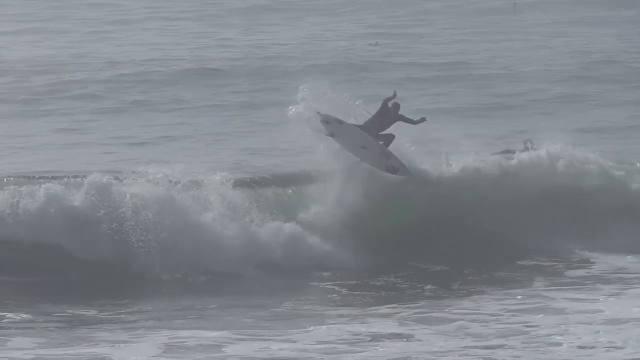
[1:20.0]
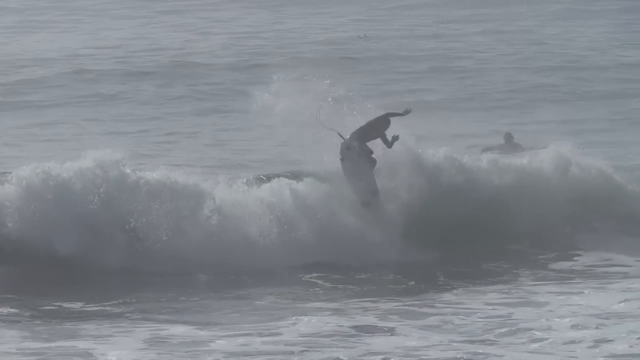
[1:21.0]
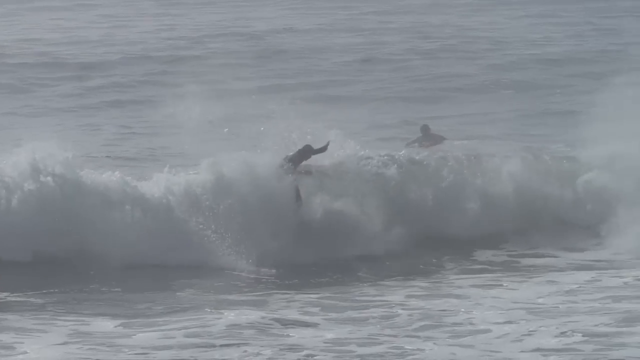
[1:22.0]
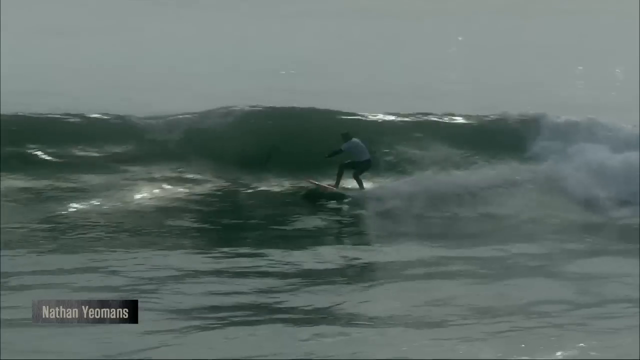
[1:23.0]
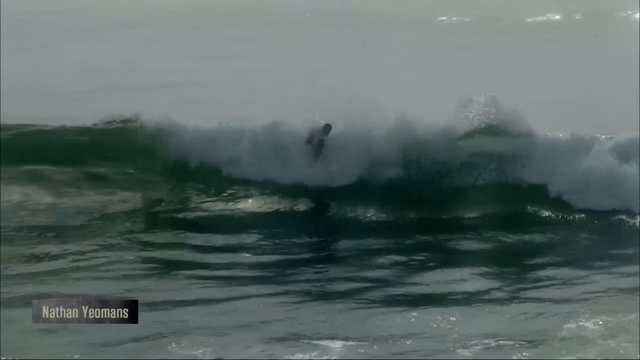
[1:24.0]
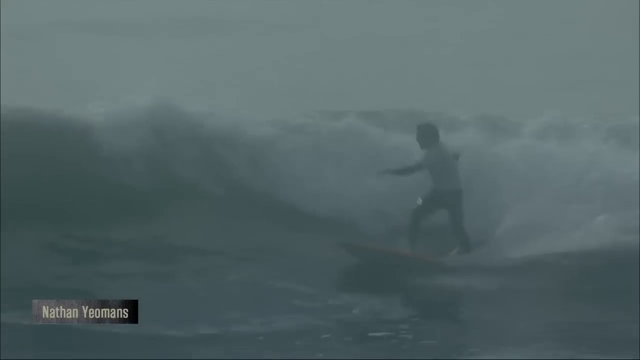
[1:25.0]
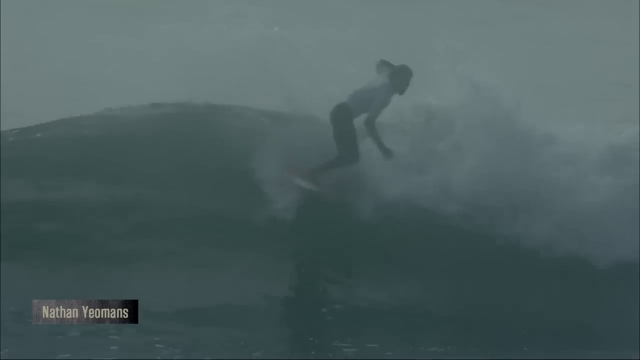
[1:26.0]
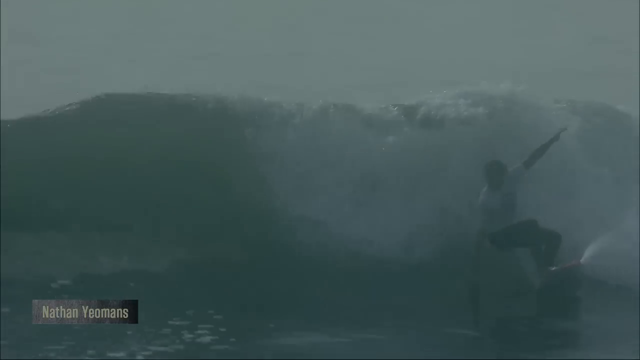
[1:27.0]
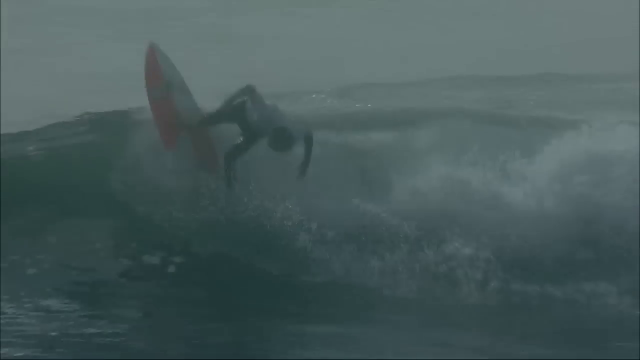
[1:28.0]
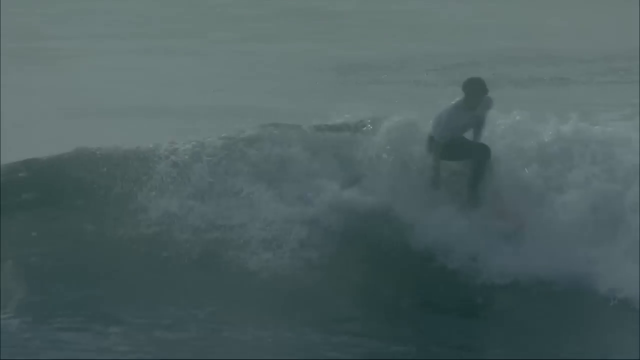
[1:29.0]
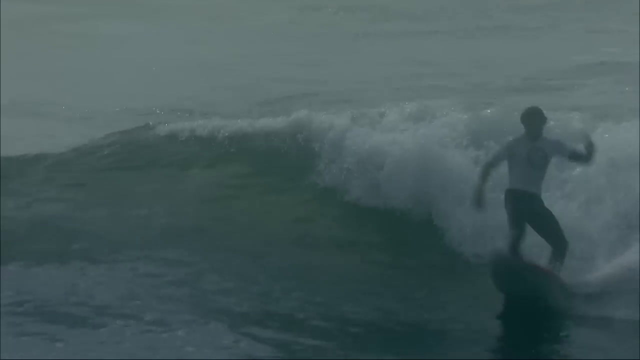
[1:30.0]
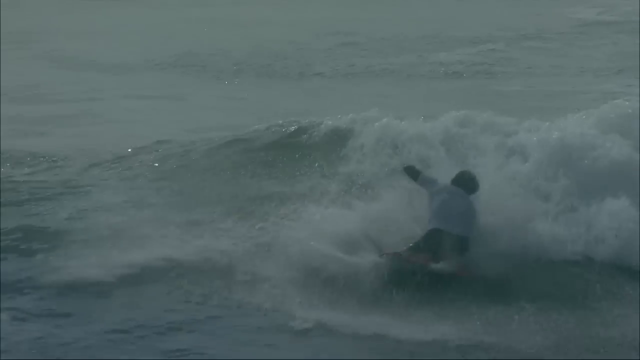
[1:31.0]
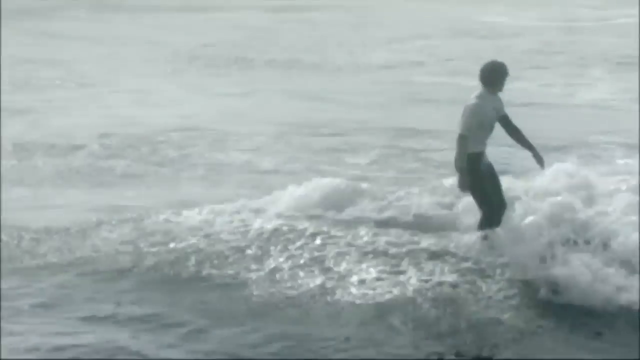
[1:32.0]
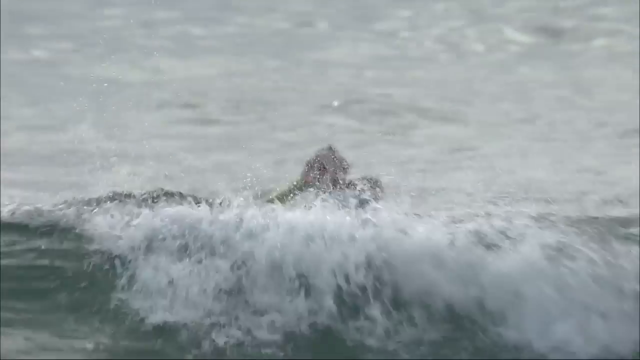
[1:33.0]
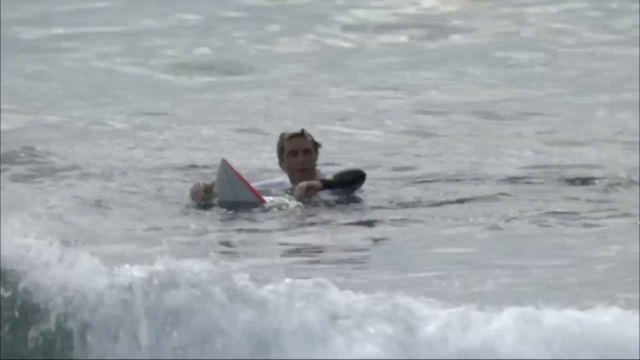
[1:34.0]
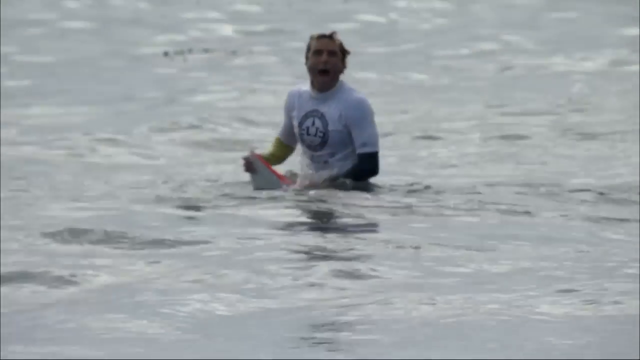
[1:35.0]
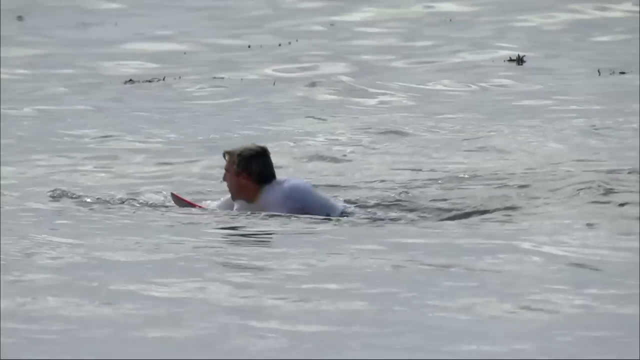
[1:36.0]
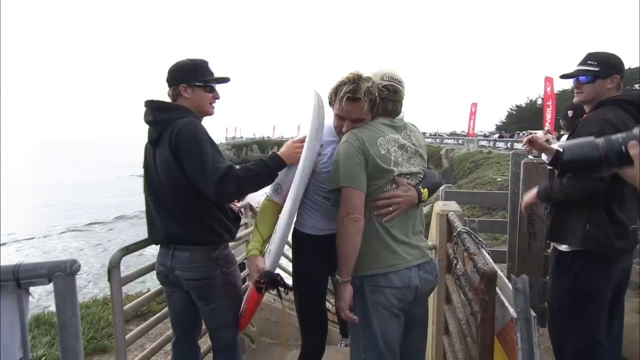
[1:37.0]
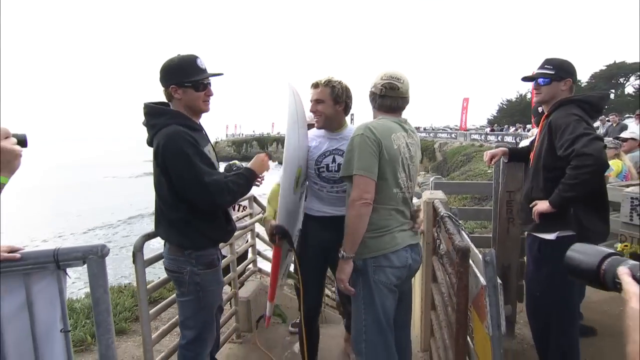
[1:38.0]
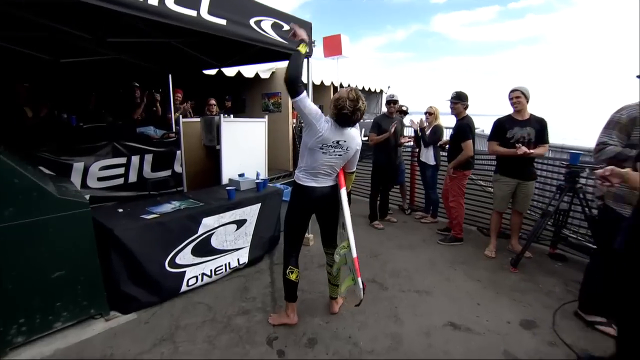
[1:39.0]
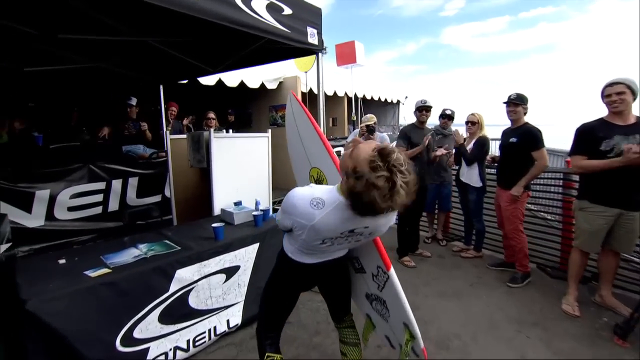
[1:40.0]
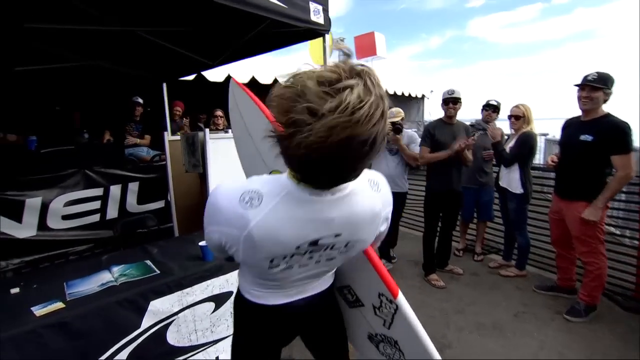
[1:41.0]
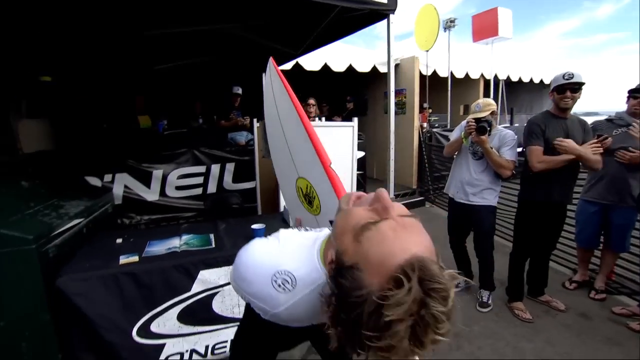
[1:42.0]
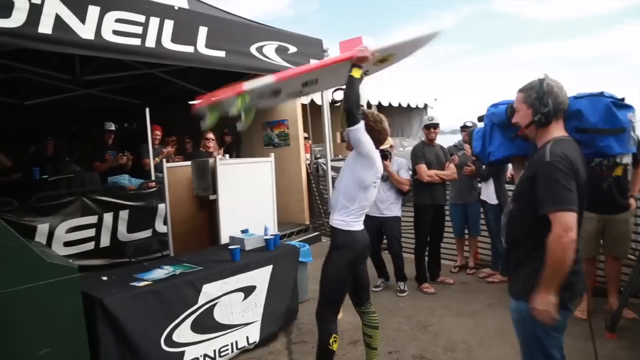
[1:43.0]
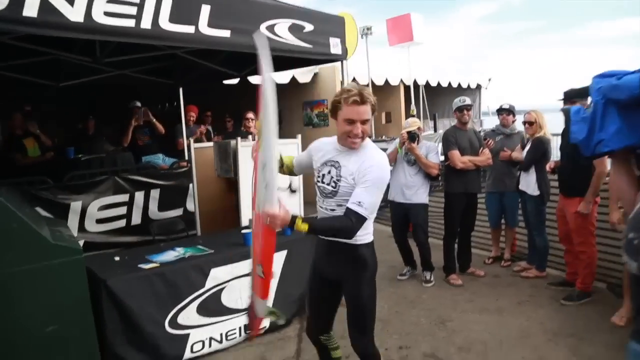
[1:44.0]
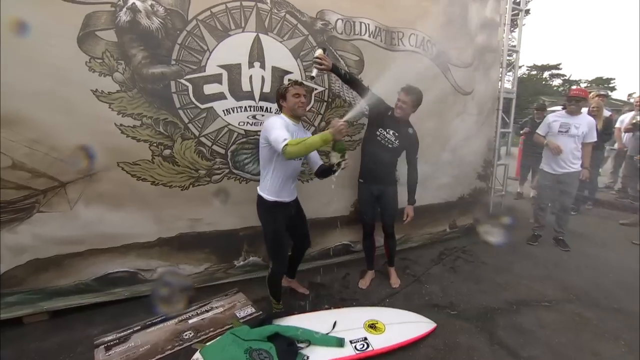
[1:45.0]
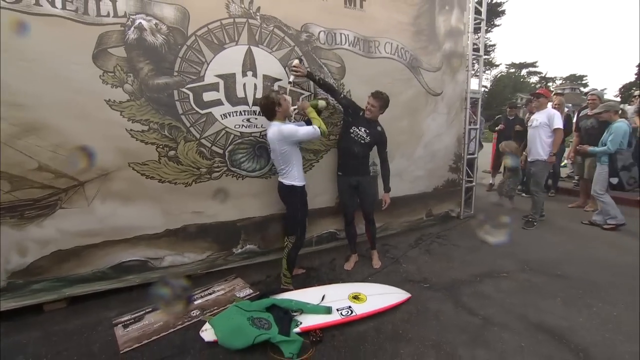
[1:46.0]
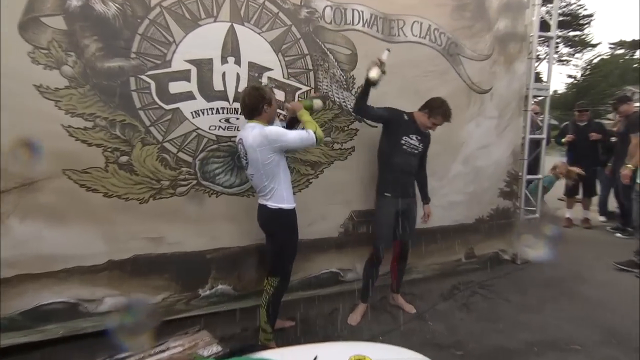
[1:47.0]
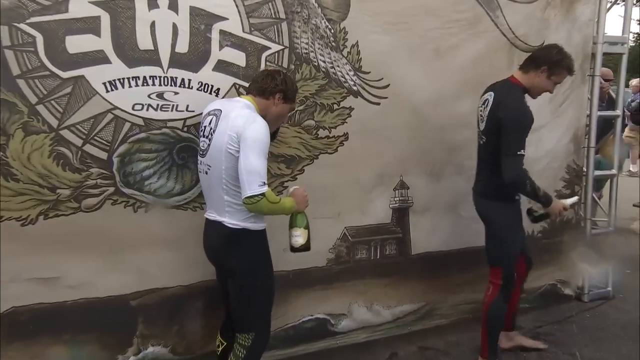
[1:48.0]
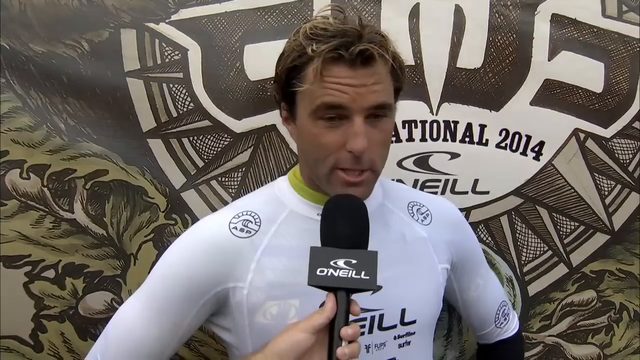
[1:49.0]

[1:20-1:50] An ocean scene shows whitewater and waves as a surfer rides a wave. The scene switches to a different surfer riding a wave; he does a little trick at the top of the wave, then rides down the whitewater in front of it. Another surfer, in a white top and dark pants or shorts, rides a surfboard that looks pink and white, doing tricks on the waves. Next, a surfer is in the water with his surfboard in front of him; he calls out to somebody and then stands up in the water. The scene then switches to four men. On the left is a man in a black hoodie, a black ball cap and dark-looking shades, apparently wearing blue jeans. Next to him, a surfer in a white top and dark pants holds a surfboard and hugs a person in an OD green t-shirt and blue jeans or jean shorts. Both of the men hugging have blonde hair. It looks like an overcast day.